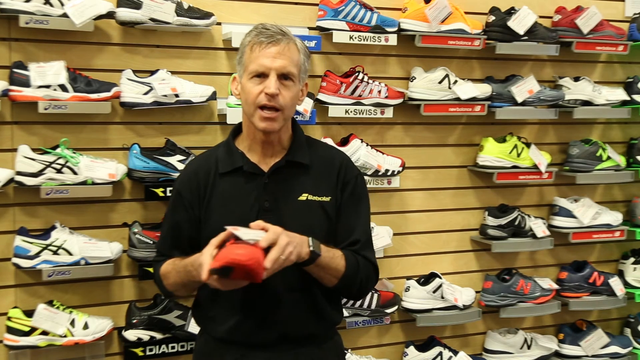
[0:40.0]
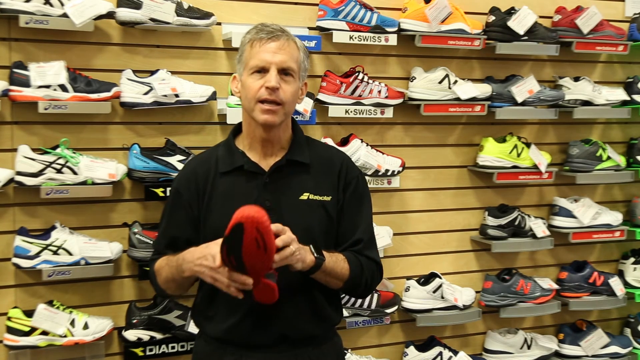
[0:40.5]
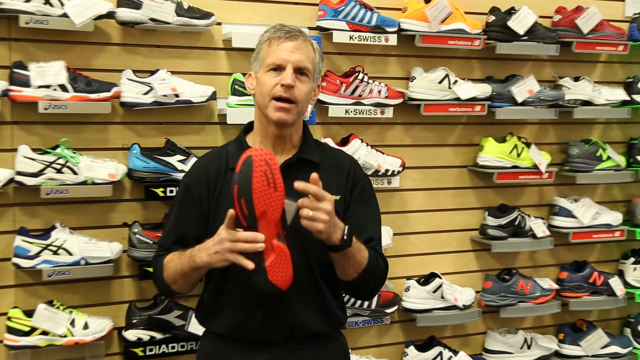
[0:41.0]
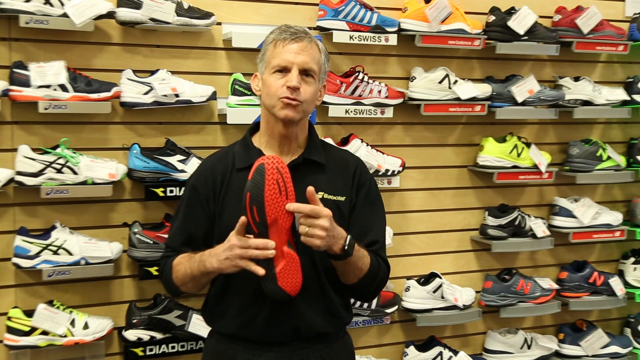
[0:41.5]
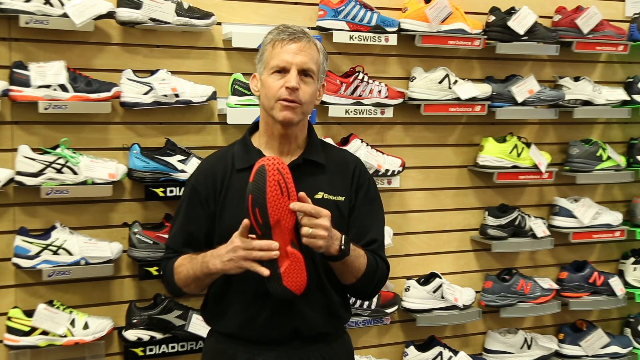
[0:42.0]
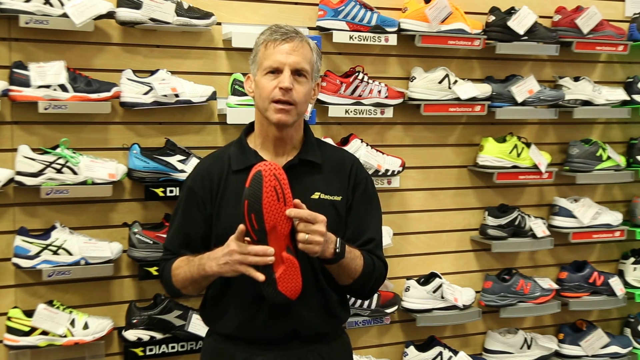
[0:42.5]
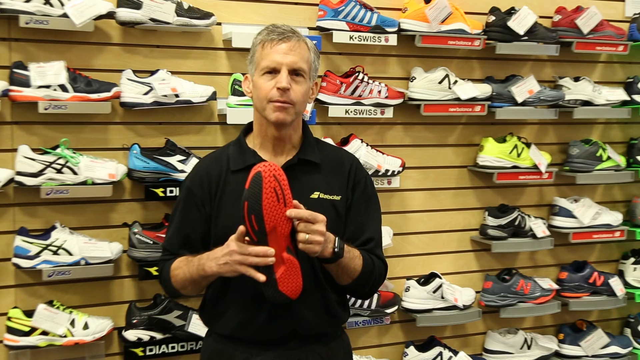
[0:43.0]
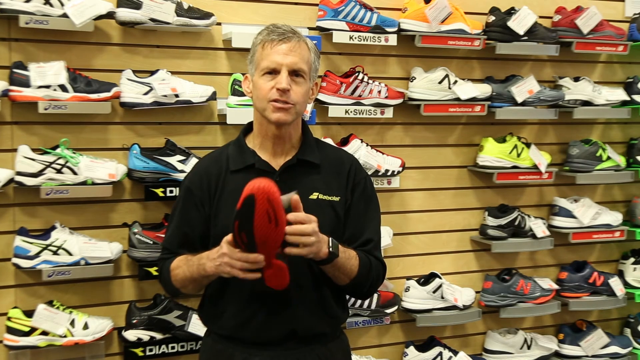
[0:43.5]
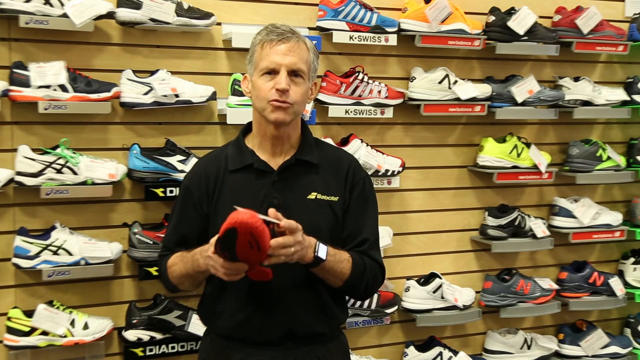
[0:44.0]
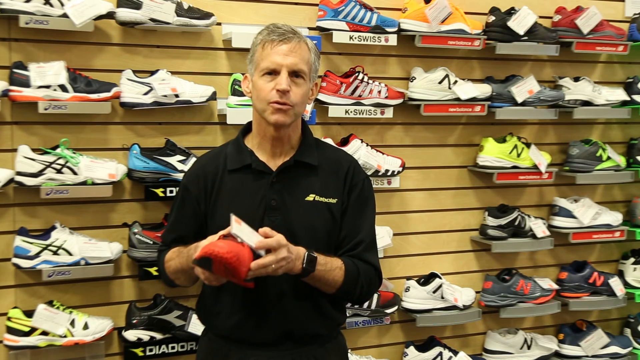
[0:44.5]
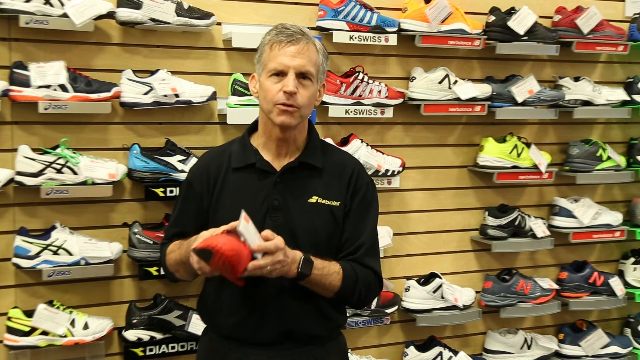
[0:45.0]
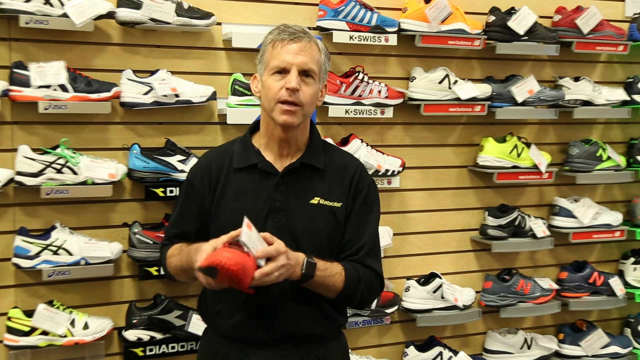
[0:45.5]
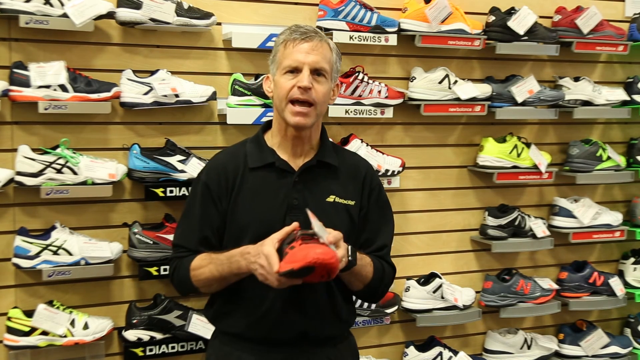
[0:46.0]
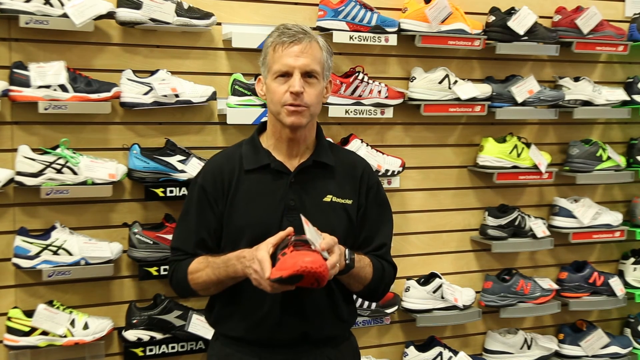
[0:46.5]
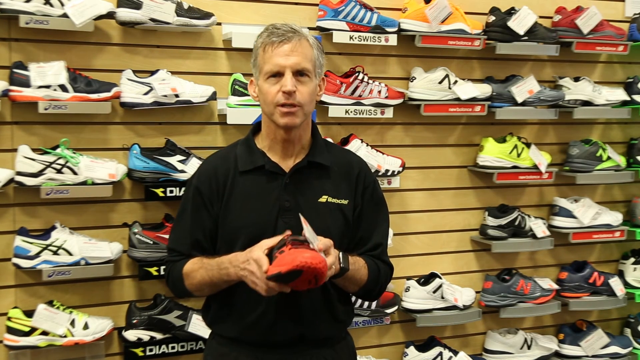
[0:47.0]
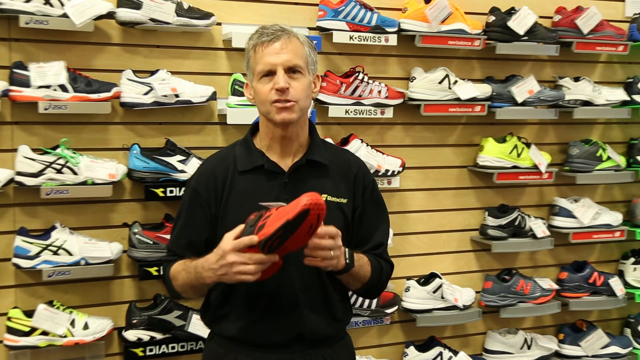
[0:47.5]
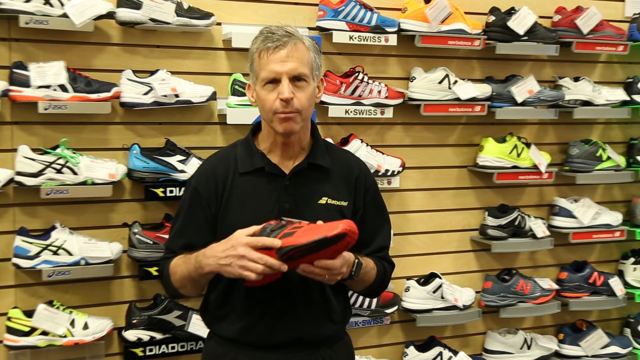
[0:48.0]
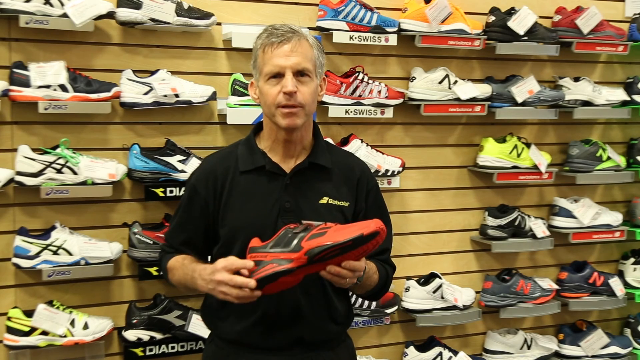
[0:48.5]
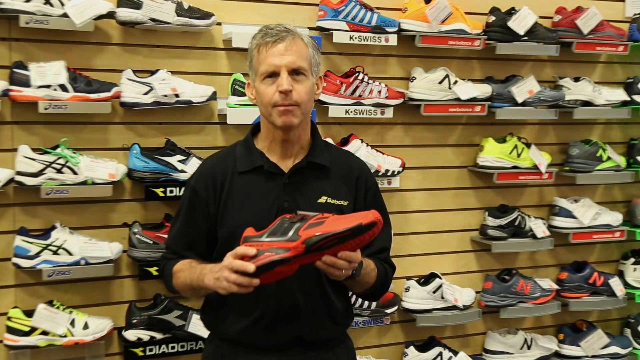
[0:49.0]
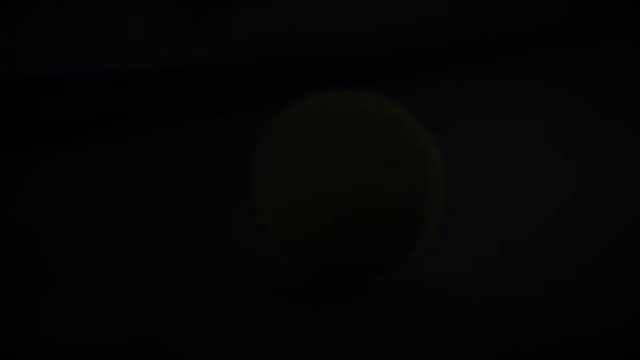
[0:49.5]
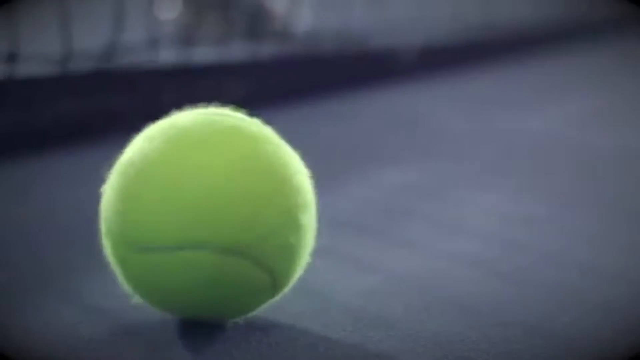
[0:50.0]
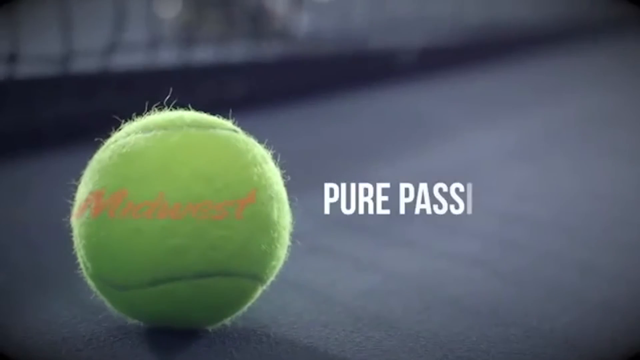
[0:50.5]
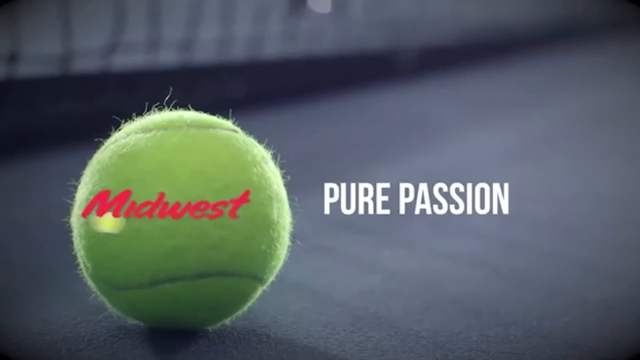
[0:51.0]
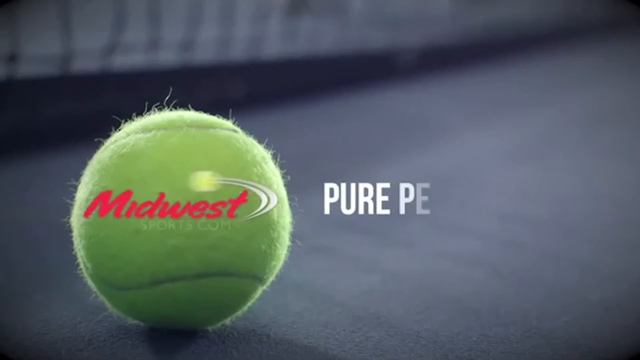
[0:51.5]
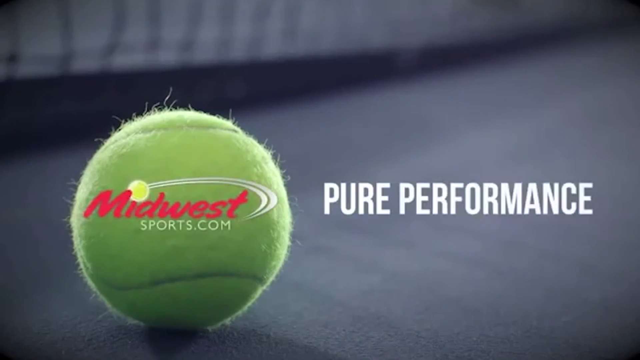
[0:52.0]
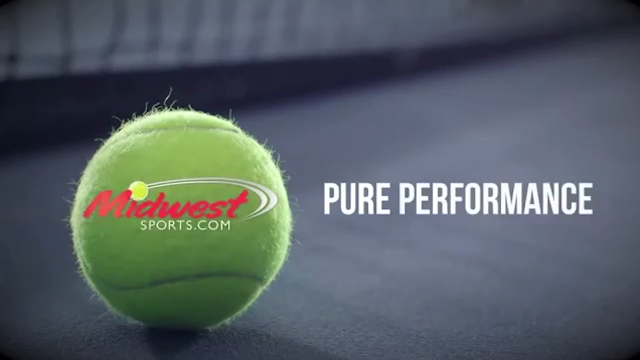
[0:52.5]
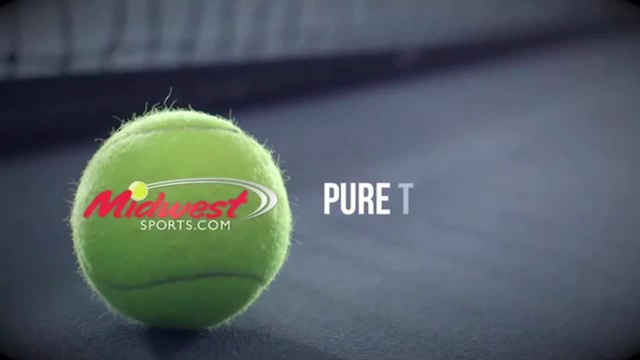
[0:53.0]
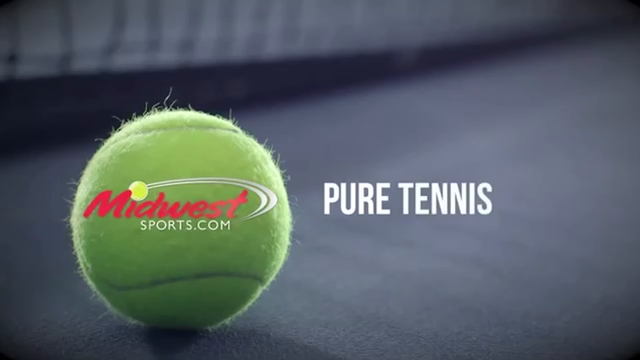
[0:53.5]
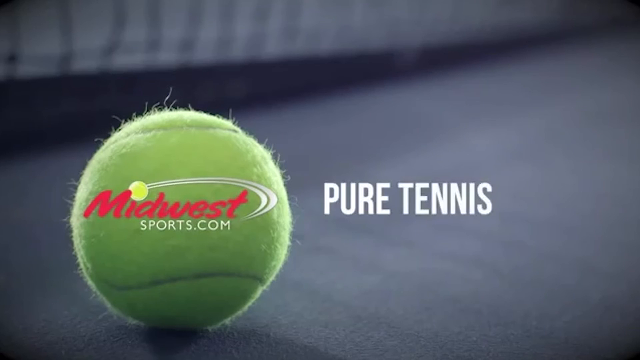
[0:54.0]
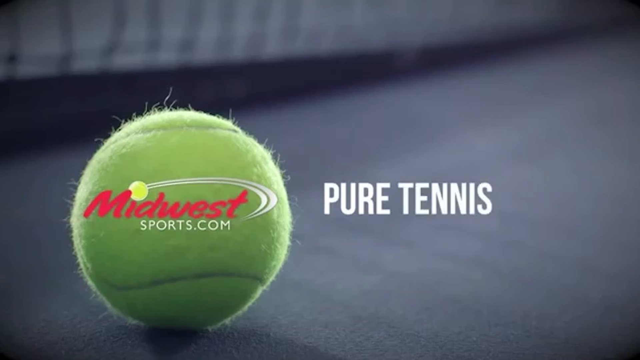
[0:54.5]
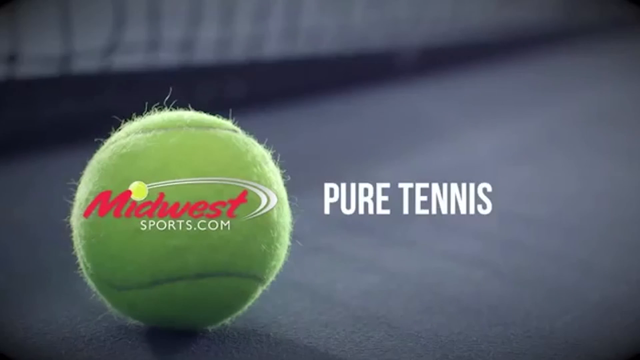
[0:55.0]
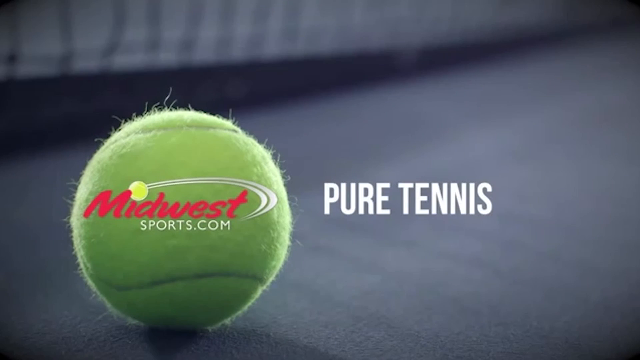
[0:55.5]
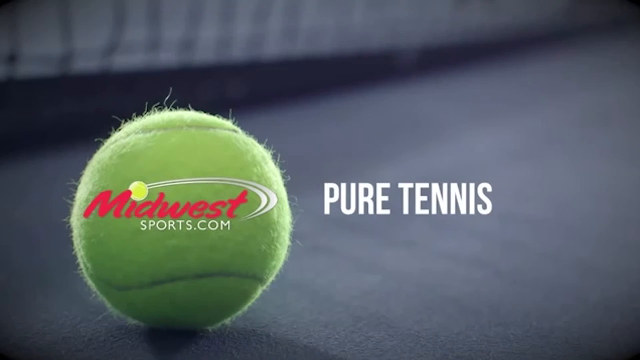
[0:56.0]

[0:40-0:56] A man stands in a shoe store in front of a display wall with athletic shoes on display in five rows. The background wall has light-colored horizontal wood panels, and the shoes are displayed on small plastic shelves, some with signs hanging below the shoe. The man wears a black collared shirt and holds a black and red athletic shoe in his hands. He speaks directly to the camera and moves the shoe around in his hands, at one point holding it up so the sole is visible. He turns the shoe sideways, and then the shot of him fades away to an end title: a tennis ball rolls into view and "Midwest Sports.com" appears on the tennis ball. Next to it, words appear: first "Pure passion", then "Pure performance", and finally "Pure tennis".